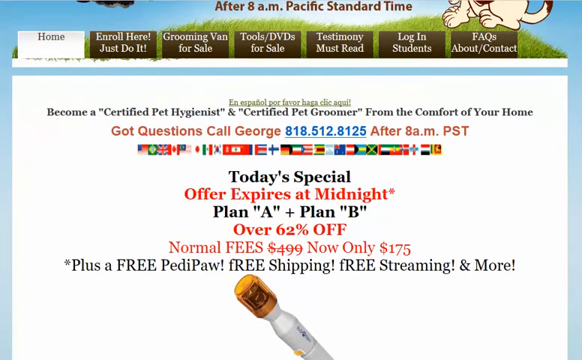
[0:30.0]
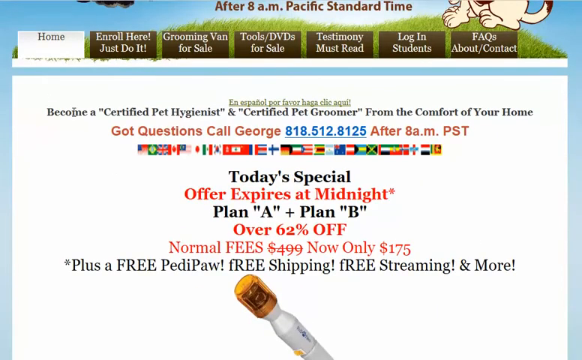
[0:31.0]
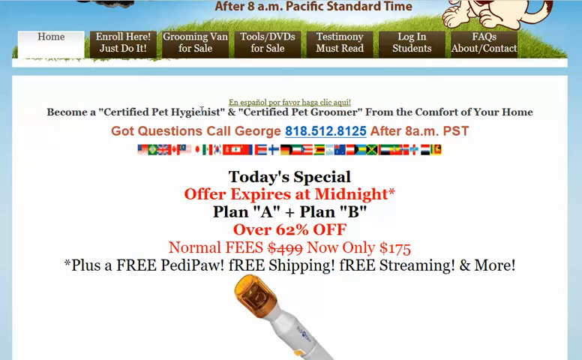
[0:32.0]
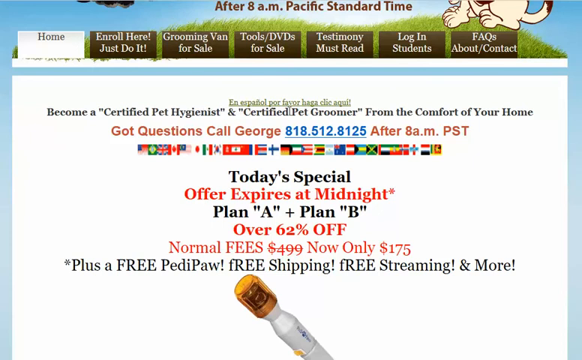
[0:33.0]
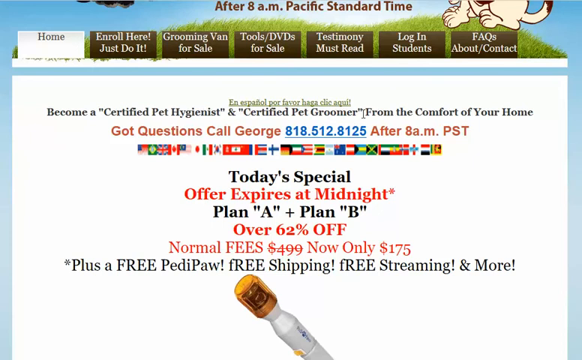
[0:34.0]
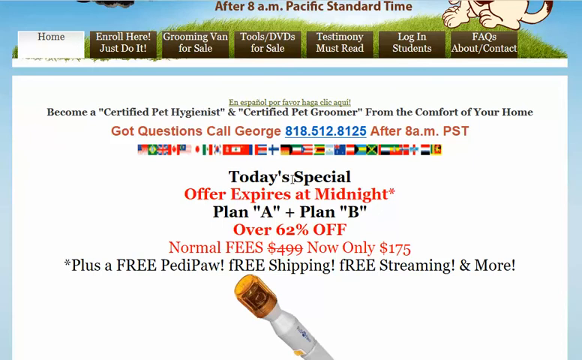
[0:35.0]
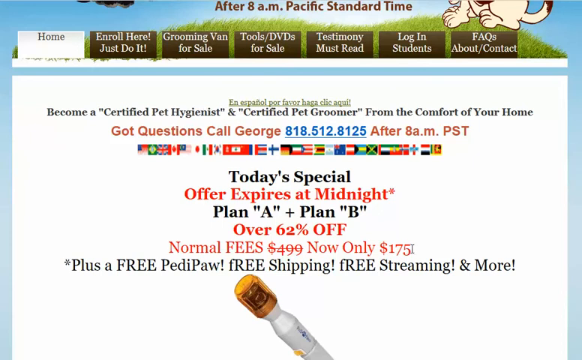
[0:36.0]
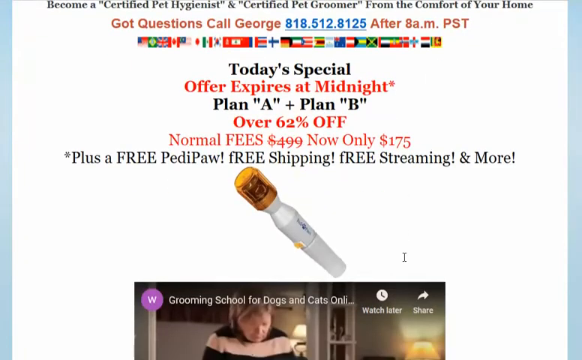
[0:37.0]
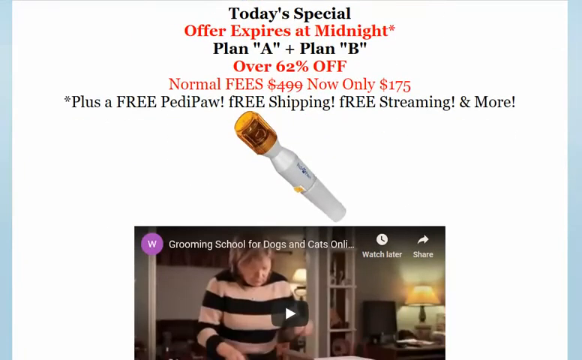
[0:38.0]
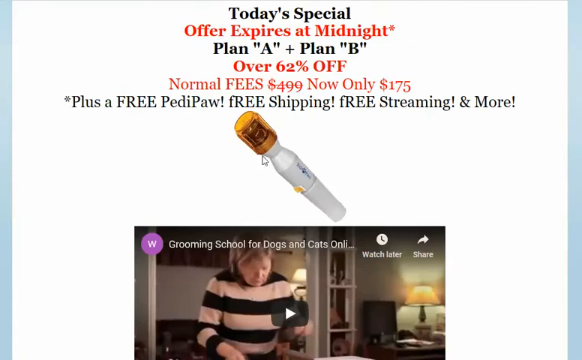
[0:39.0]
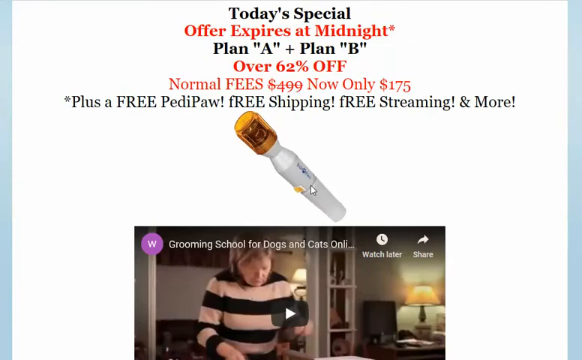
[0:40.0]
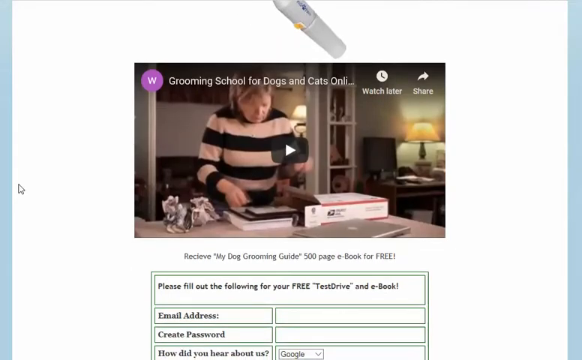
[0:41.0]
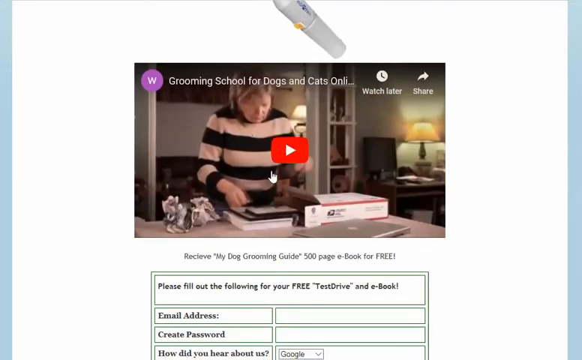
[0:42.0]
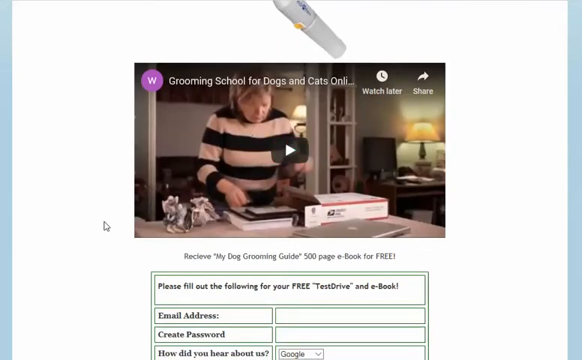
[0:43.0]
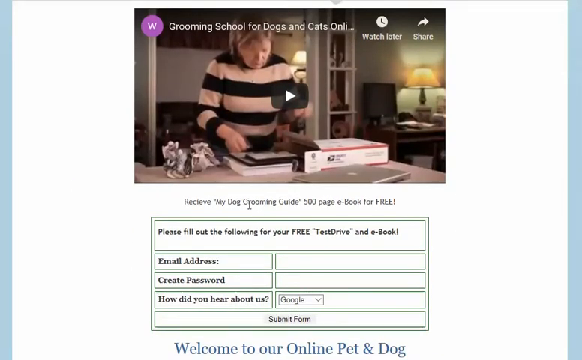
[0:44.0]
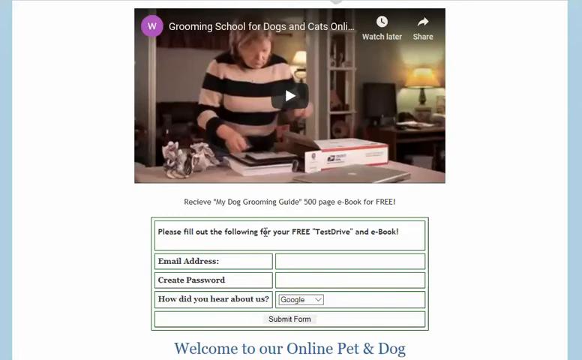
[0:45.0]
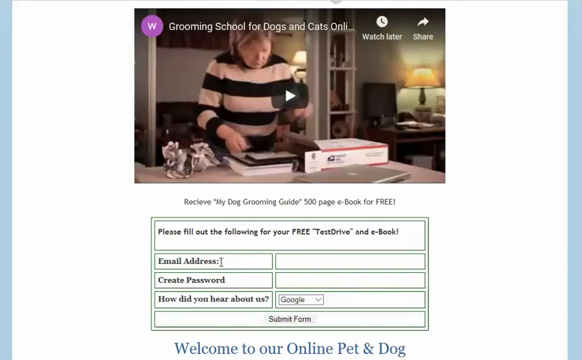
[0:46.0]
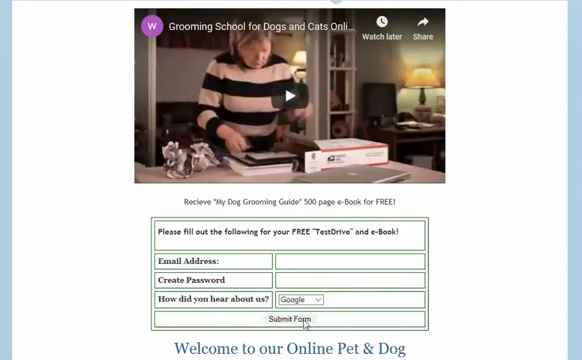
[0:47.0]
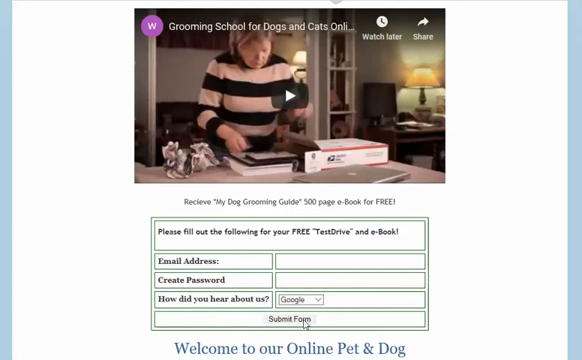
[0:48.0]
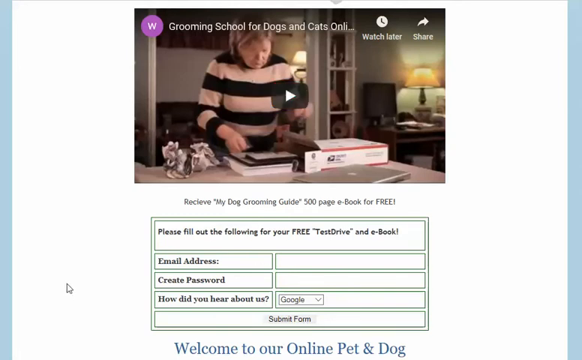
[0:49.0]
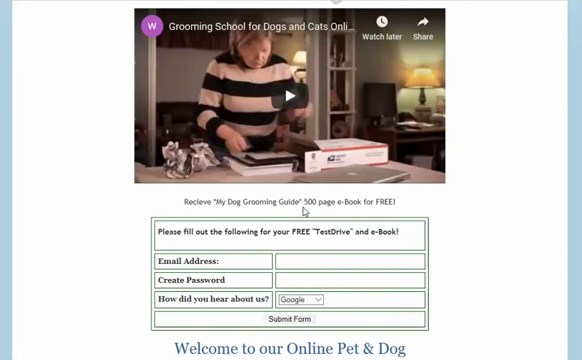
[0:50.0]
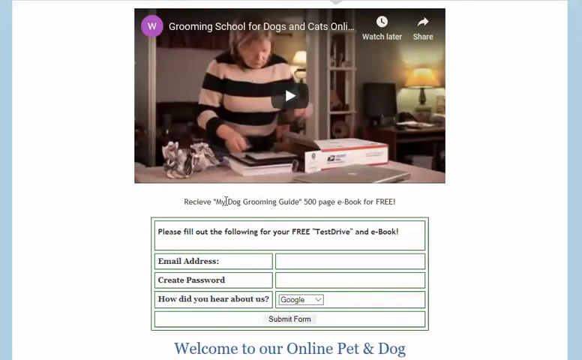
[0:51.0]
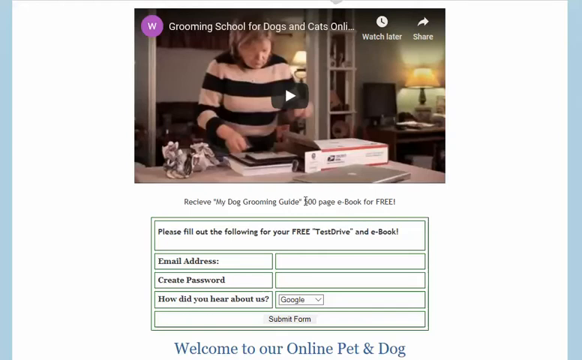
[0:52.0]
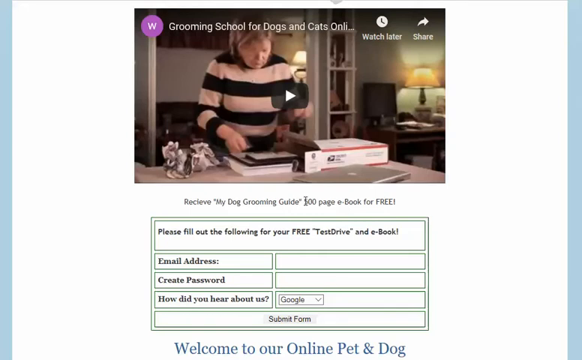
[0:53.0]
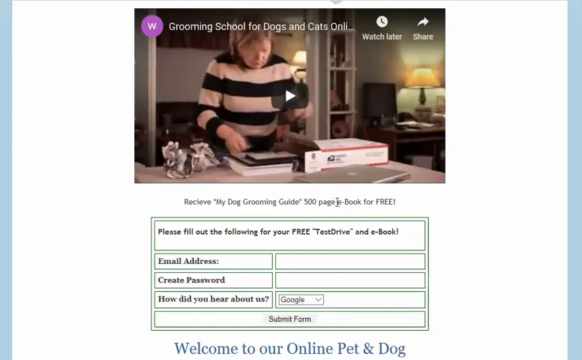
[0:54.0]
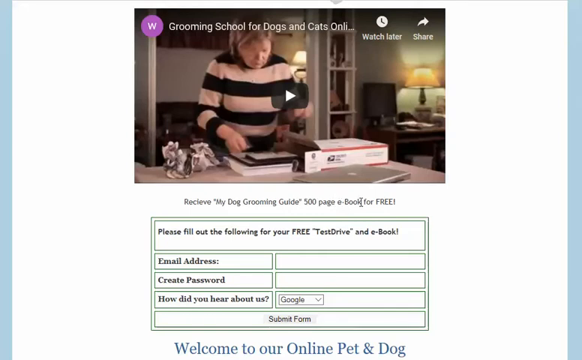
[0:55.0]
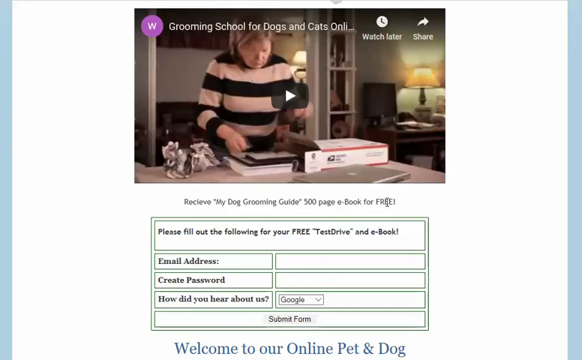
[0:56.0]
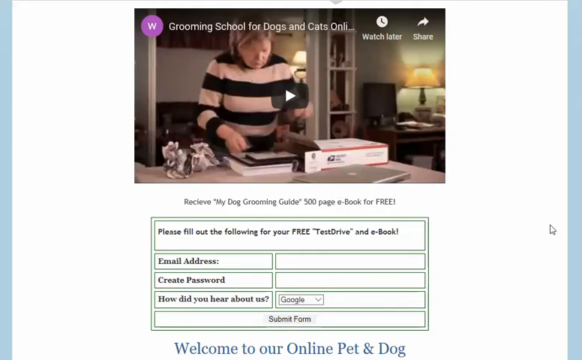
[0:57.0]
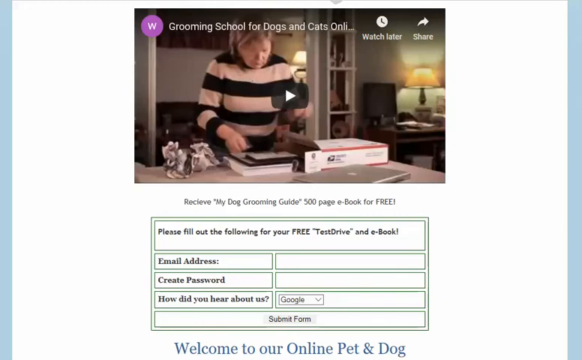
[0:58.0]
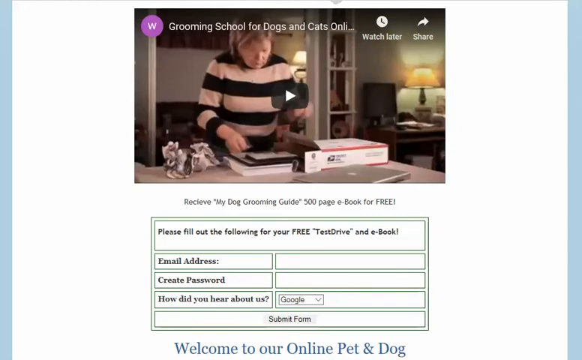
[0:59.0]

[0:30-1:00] Someone uses the mouse to move around the dog grooming website. The pointer hovers over the section reading "become a certified pet hygienist and certified pet groomer from the comfort of your own home", "today's special offer expires at midnight", "plan a and plan b 62% off", "normal fees $4.99 now only $1.75", along with a free item, "free shipping free streaming and more". The person scrolls further down the page, where a white object with a plastic orange top and an orange button on the side appears; the mouse hovers over it. The page scrolls again to a video for "Grooming School for Dogs and Cats online", and the mouse clicks the red triangle in its centre, then hovers over "Receive My Dog Grooming Guide 500 page e-book for free". Below is a box for filling in an email address and password, a submission form to get a free test drive and e-book.